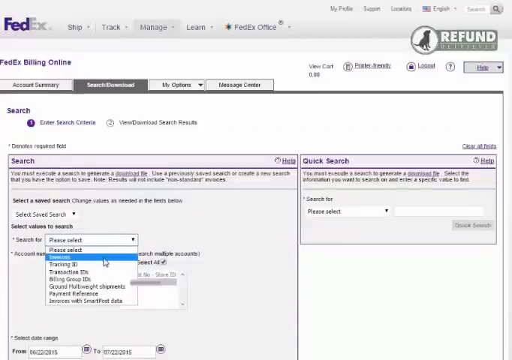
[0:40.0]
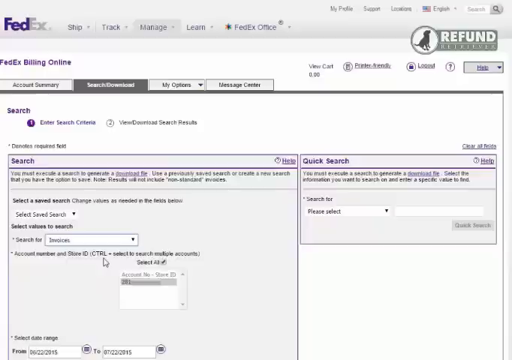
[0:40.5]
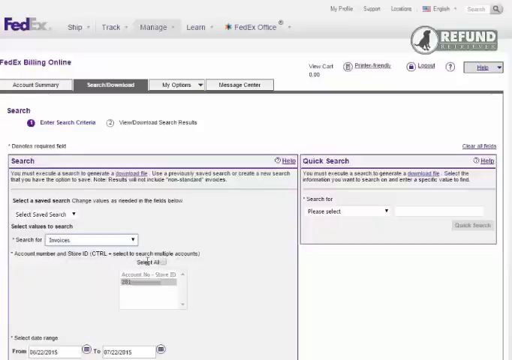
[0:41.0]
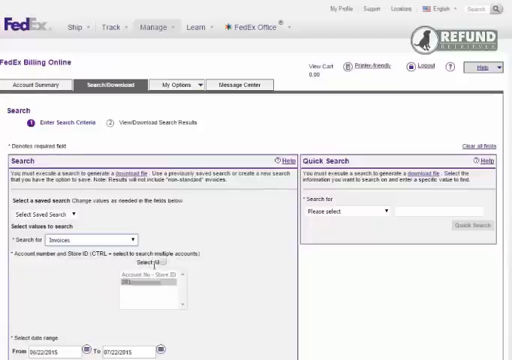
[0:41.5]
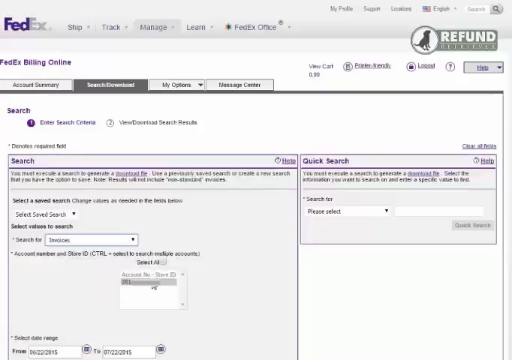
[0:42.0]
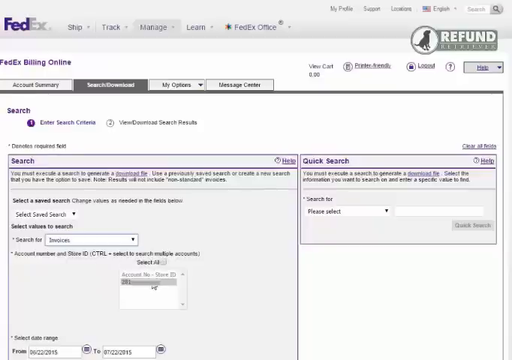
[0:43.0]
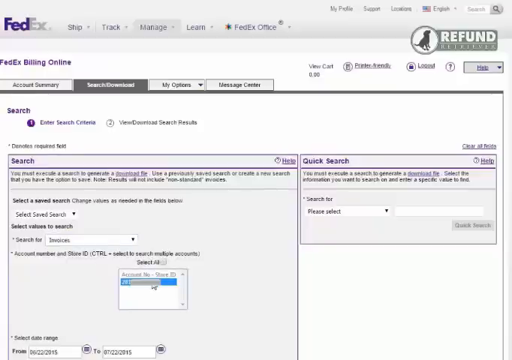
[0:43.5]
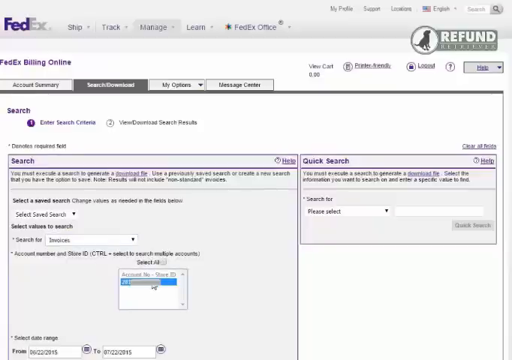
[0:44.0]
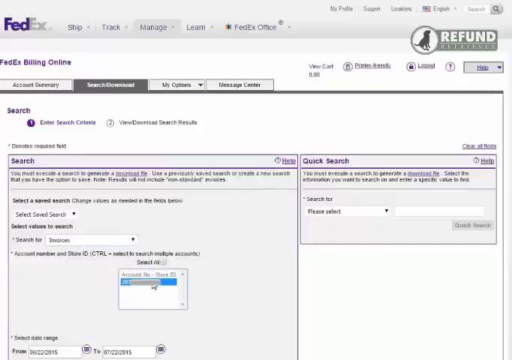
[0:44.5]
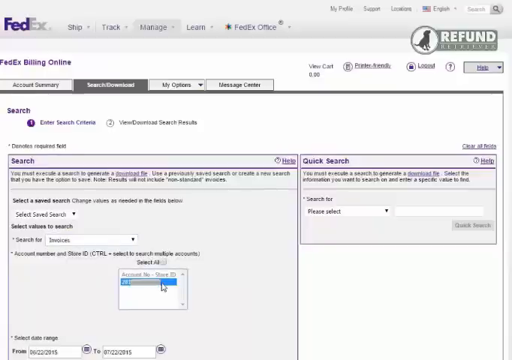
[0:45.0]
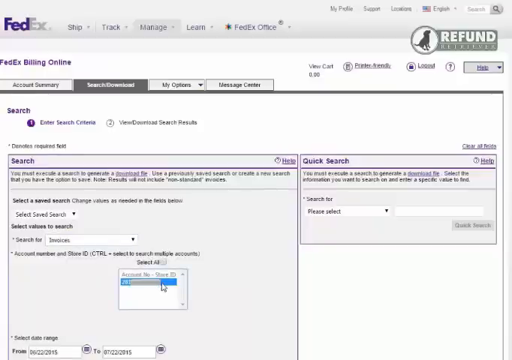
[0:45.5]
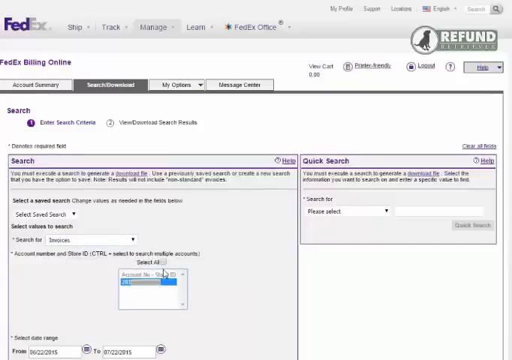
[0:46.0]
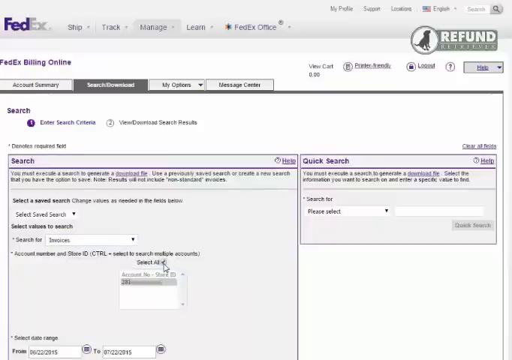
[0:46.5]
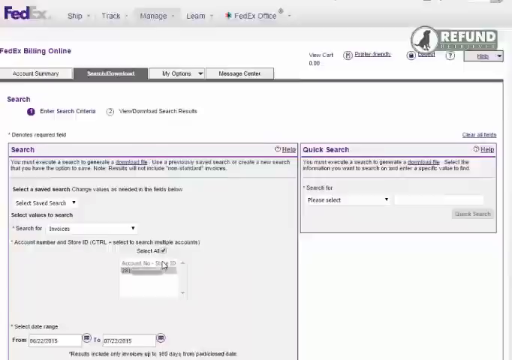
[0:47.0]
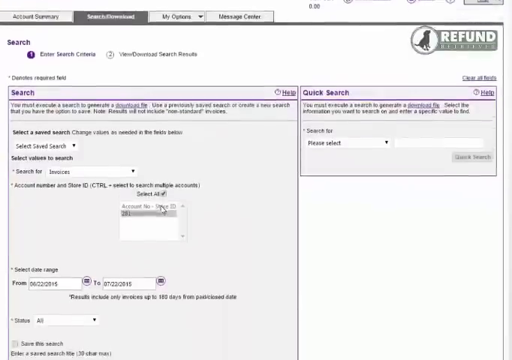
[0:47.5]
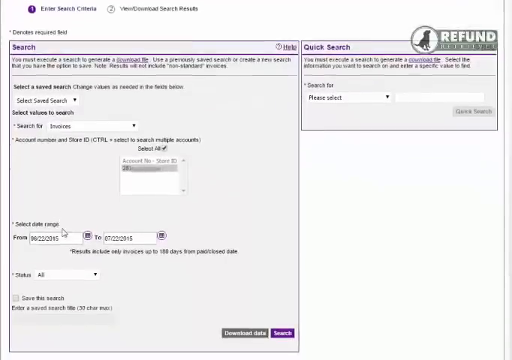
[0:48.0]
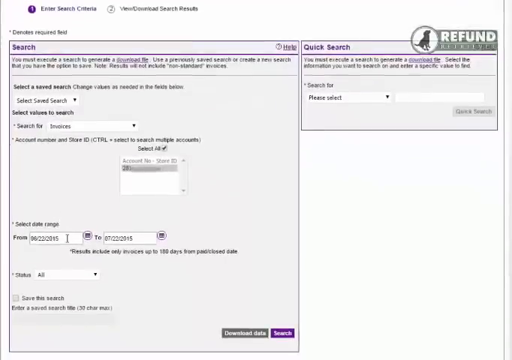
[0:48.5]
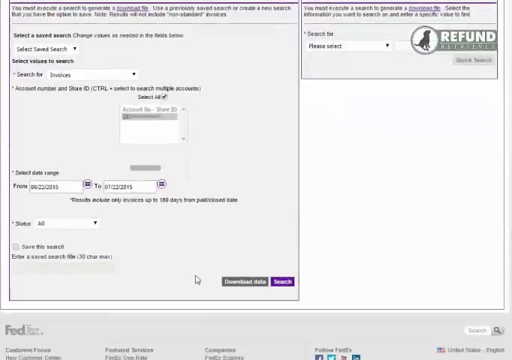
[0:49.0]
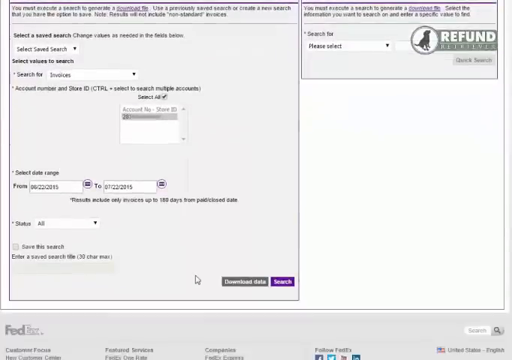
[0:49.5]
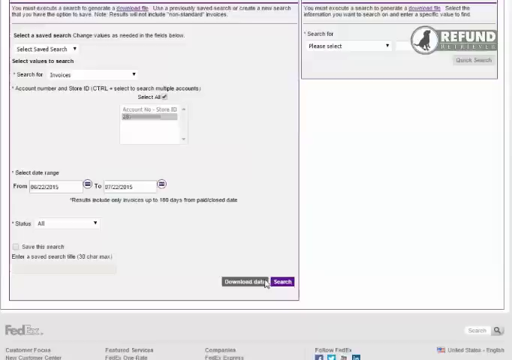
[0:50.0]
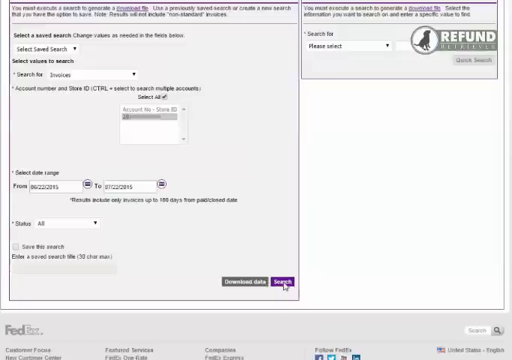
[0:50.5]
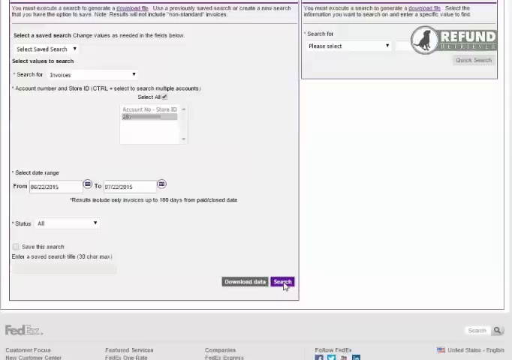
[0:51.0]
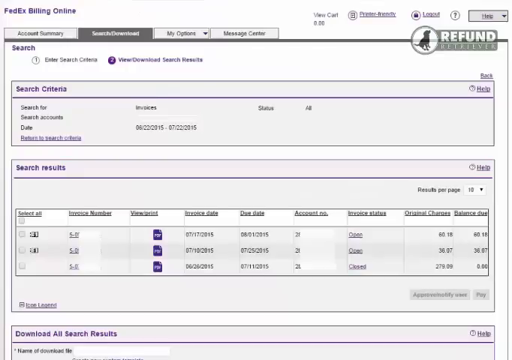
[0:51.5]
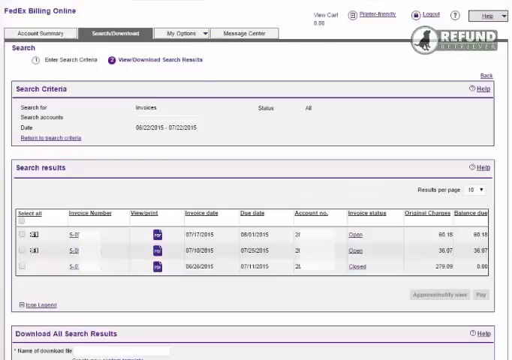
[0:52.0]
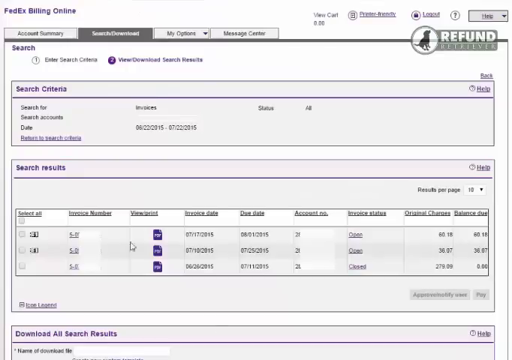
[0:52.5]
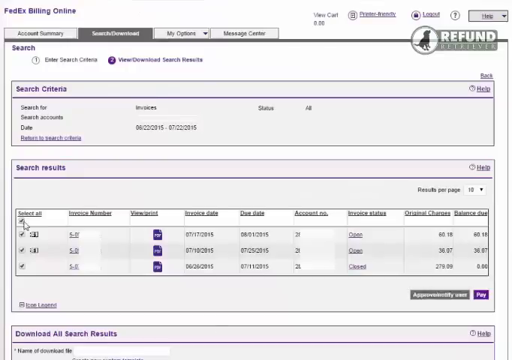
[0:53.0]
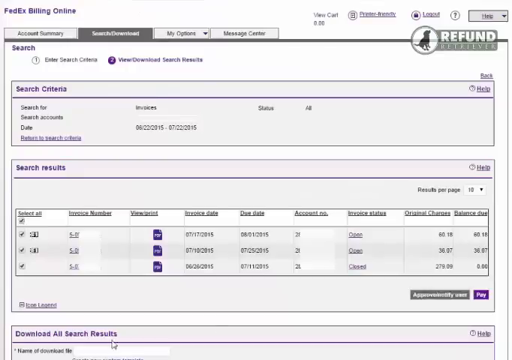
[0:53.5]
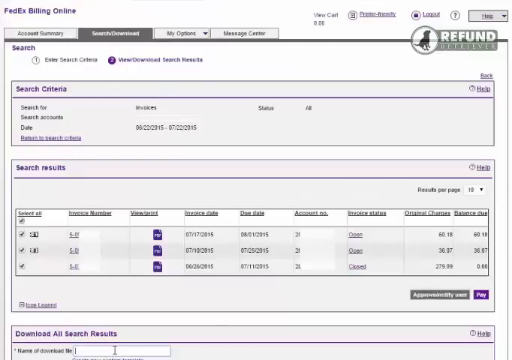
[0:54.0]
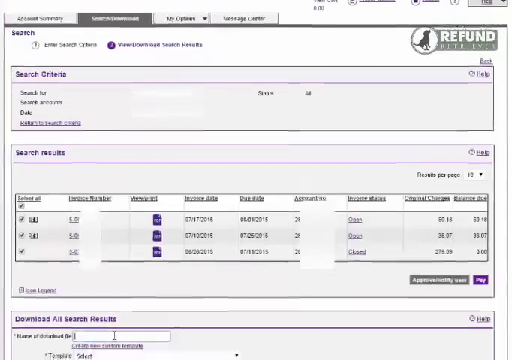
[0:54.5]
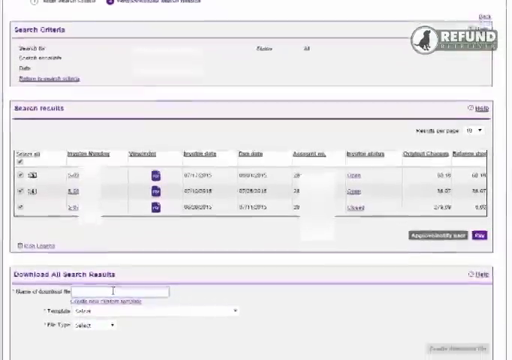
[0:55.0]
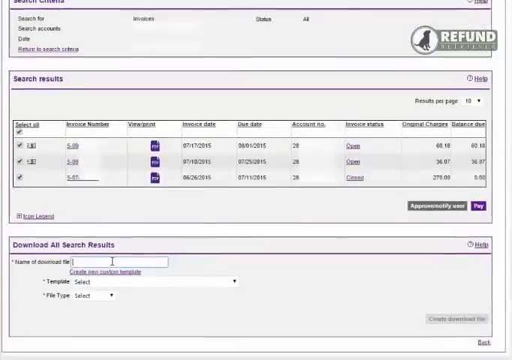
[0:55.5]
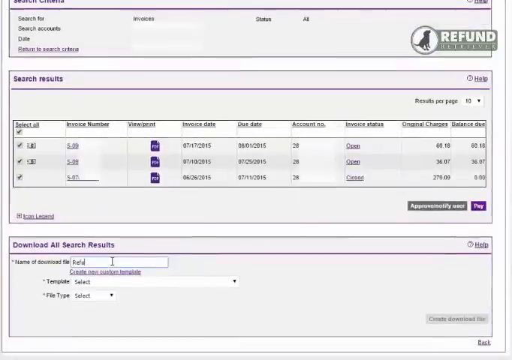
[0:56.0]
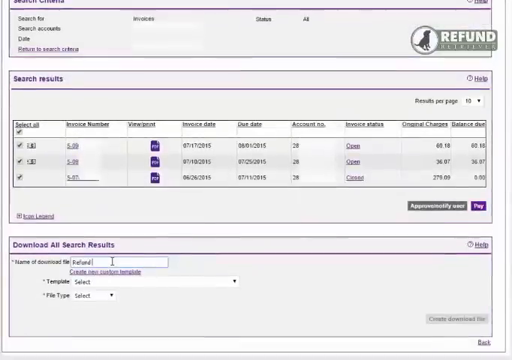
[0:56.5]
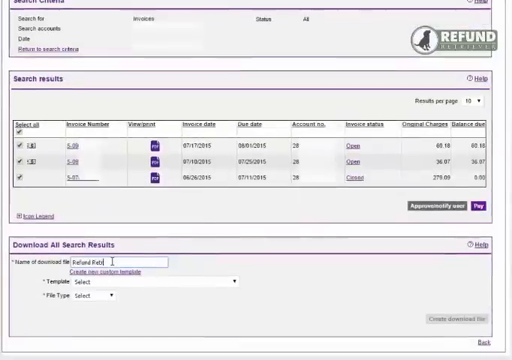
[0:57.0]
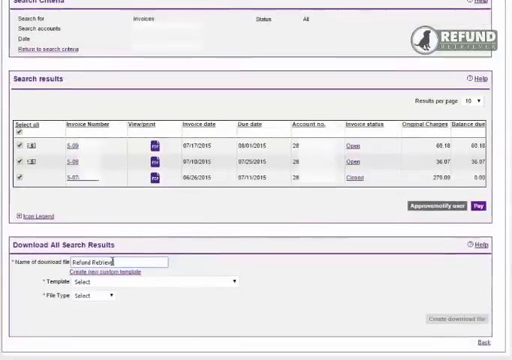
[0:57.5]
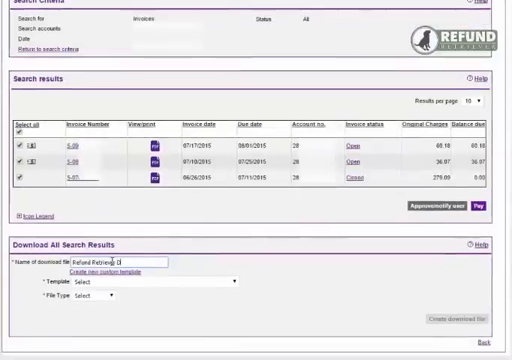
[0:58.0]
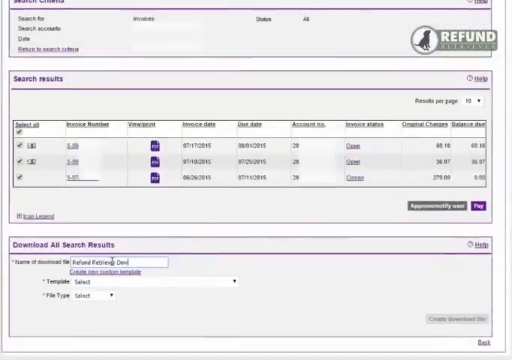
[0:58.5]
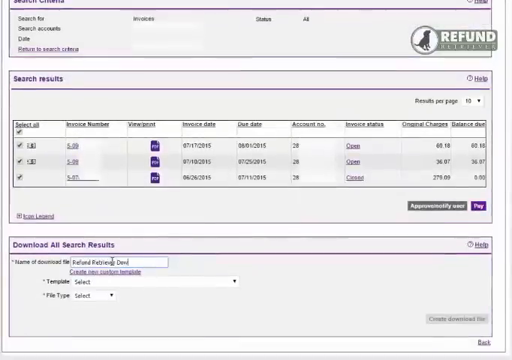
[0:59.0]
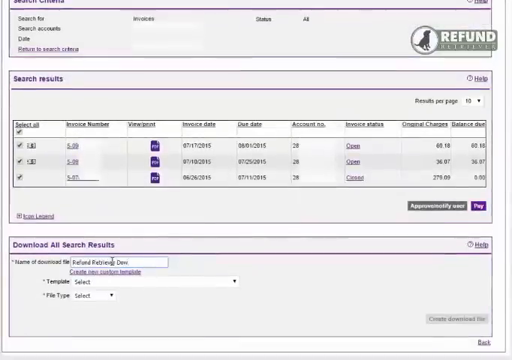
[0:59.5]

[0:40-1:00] The FedEx website is on a page that has "search" in blue text. Above it are four tabs in light gray, except for the currently selected one, which is dark gray with white text. Underneath seems to be a drop-down menu that the user has selected, and they hover over one of the options, which is highlighted in light blue; they seem to select it. They then scroll down, and in the lower right corner of a window that popped up is a purple button with white text that says "search." The cursor hovers over it and clicks it. The site navigates to another window showing a menu with some options, including a "select all" tab on the left side with four check marks underneath it. The user then scrolls down to an input box and types something into it.